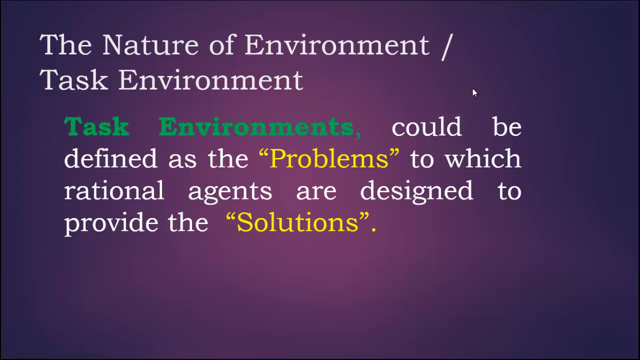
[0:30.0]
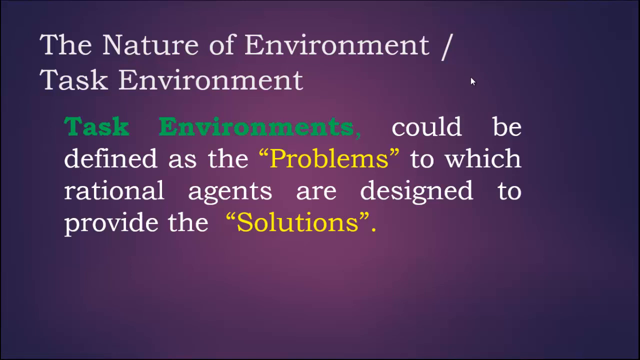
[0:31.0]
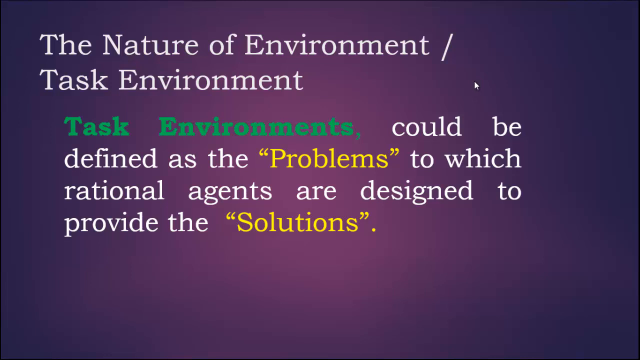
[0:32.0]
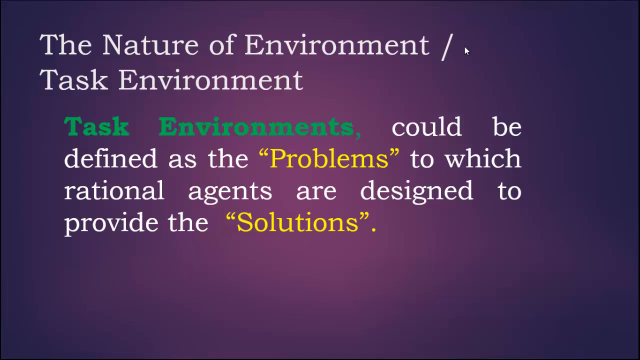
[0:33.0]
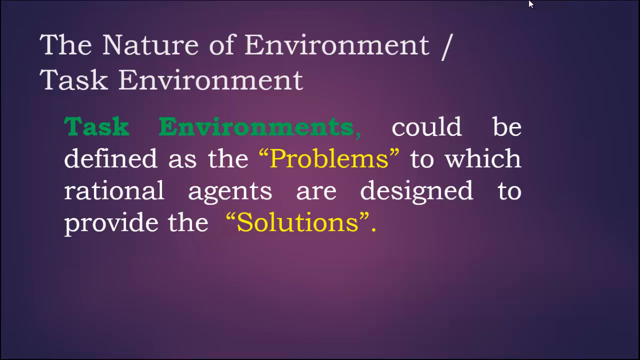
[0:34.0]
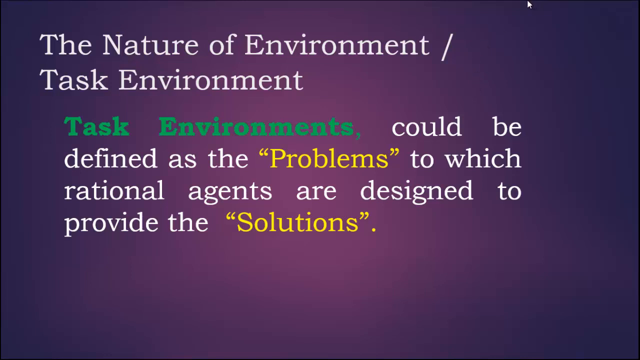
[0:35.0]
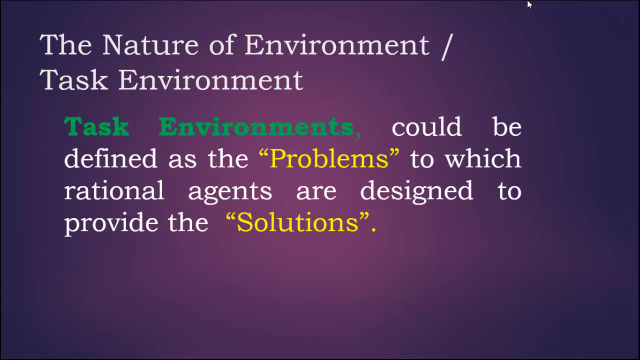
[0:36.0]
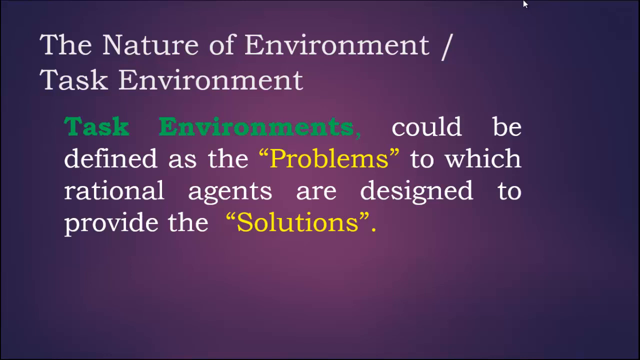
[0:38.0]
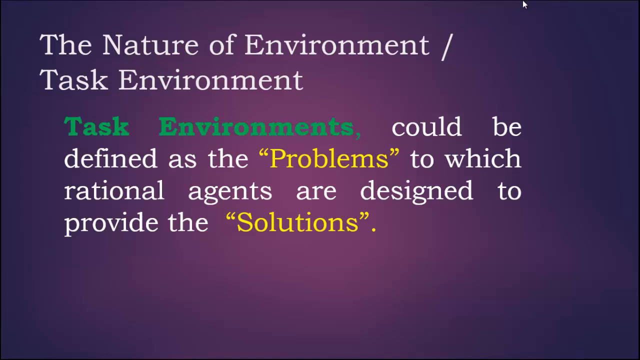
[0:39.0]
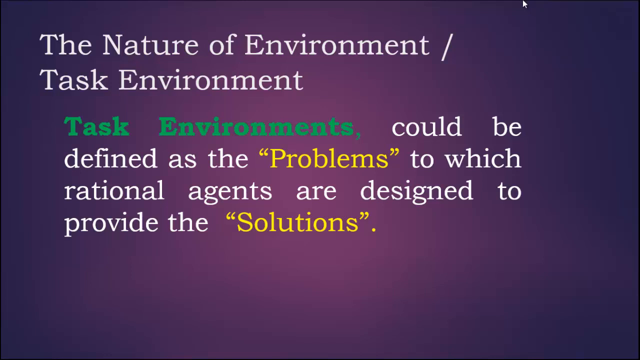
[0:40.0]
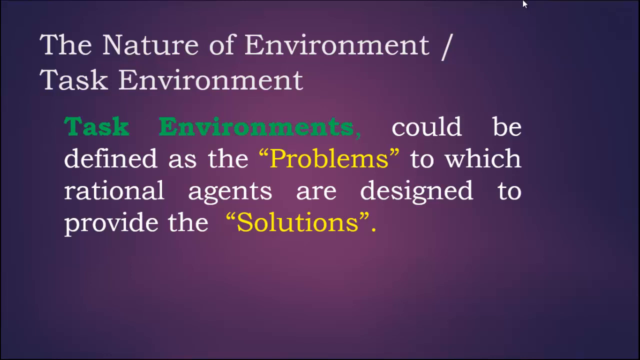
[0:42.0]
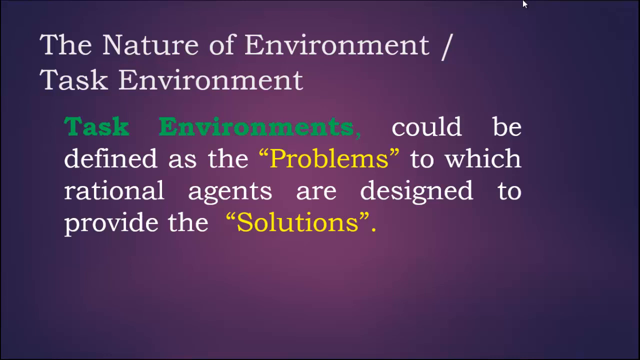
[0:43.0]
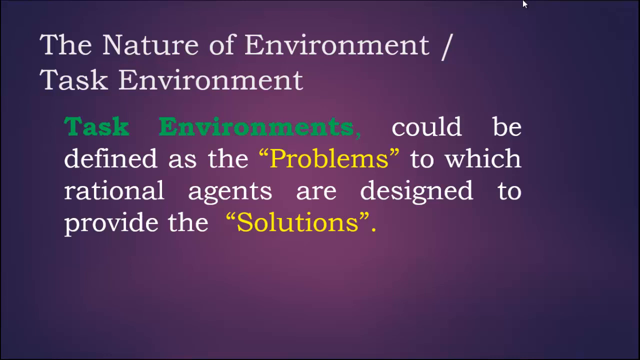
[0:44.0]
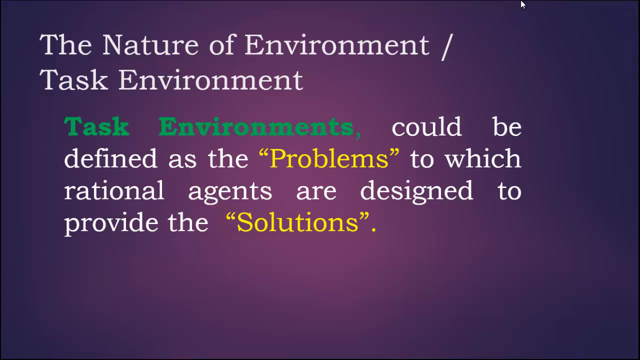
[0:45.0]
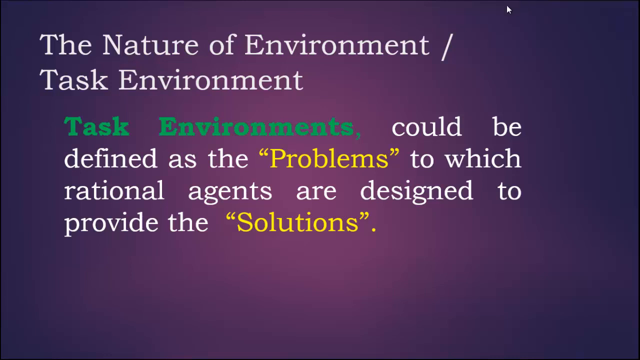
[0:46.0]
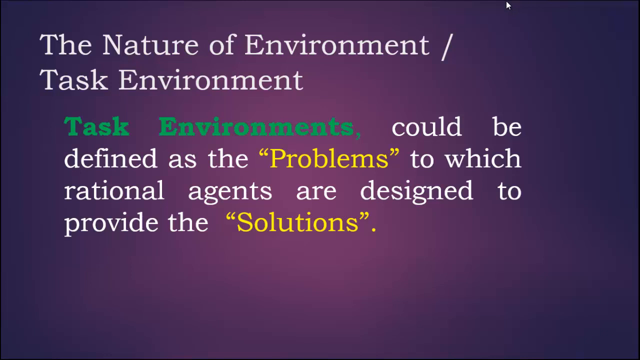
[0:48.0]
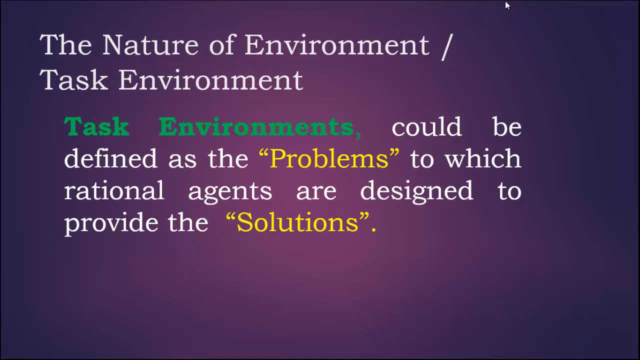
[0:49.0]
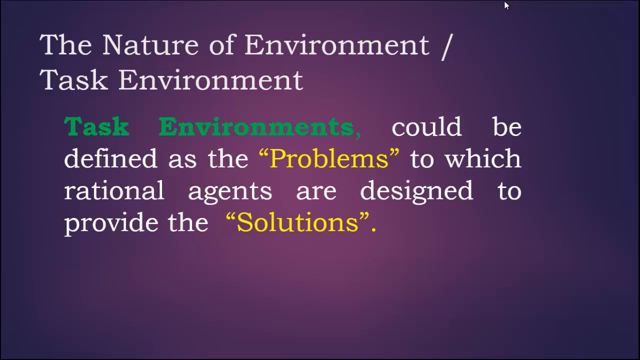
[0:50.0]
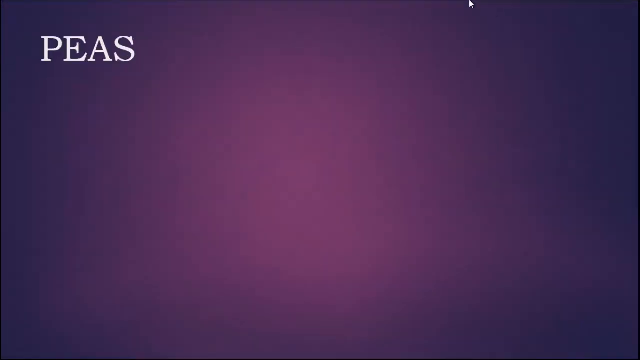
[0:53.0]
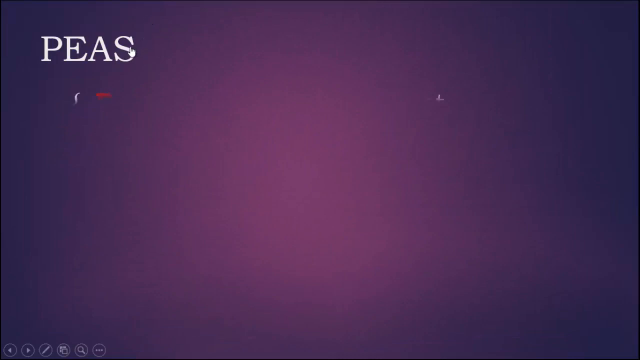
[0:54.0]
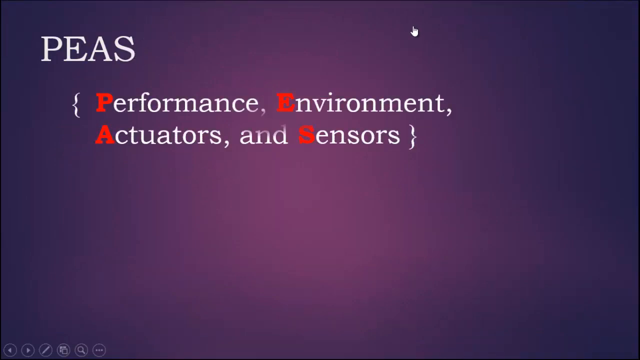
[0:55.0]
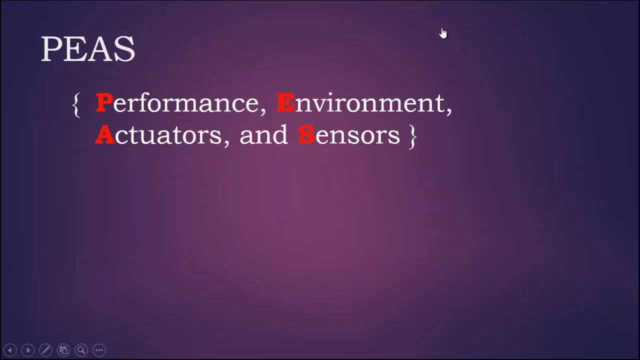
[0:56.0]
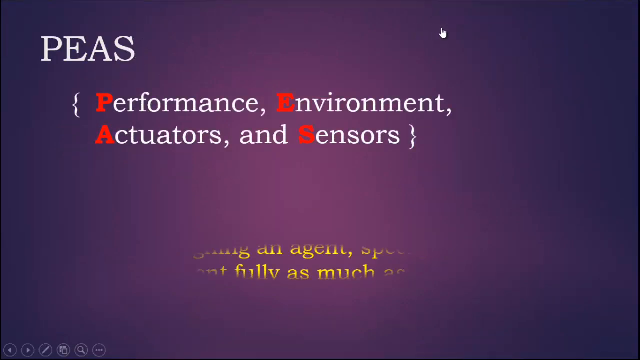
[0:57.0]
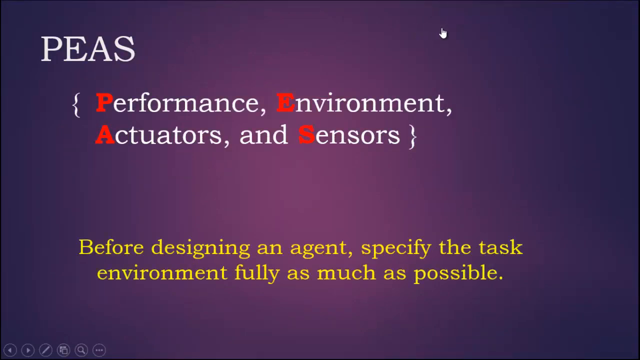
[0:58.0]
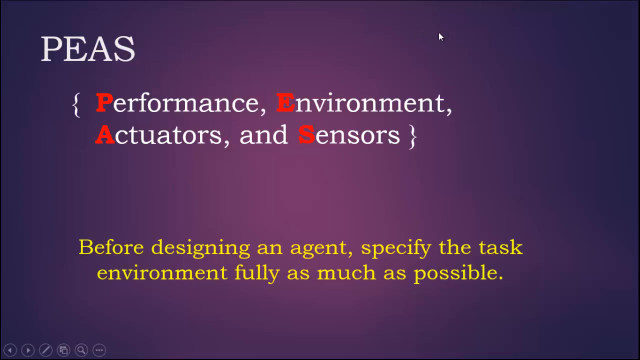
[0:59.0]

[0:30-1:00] The title "The Nature of Environment / Task Environment" is at the top of the screen, with a description below it in which the words "Task Environments" are bolded in green. The cursor moves up and hovers toward the top of the page, and the camera stays on the description for a few moments. The next slide follows: "nature of task environment" fades, and "PEAS acronym" appears, with the words "performance, environment, actuators, and sensors" listed in brackets. The first letters of each word, P, E, A and S, are bolded and in yellow. A sentence in yellow appears at the bottom: "before designing an agent, specify the task environment fully as much as possible." It looks like an informative or training module.